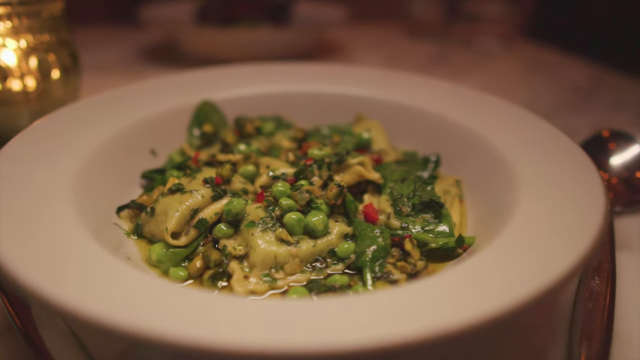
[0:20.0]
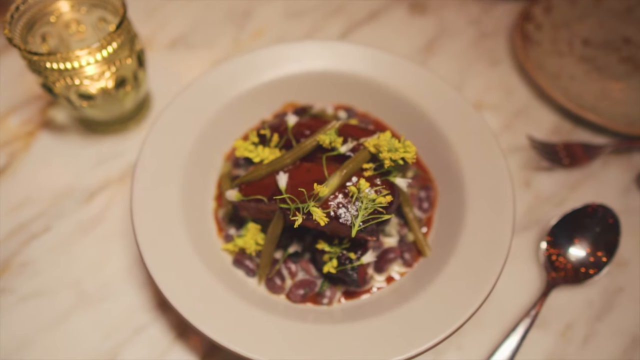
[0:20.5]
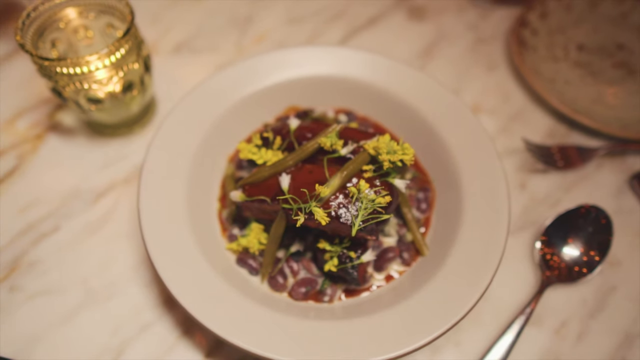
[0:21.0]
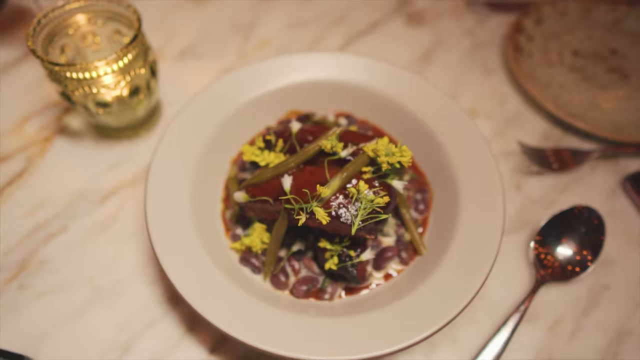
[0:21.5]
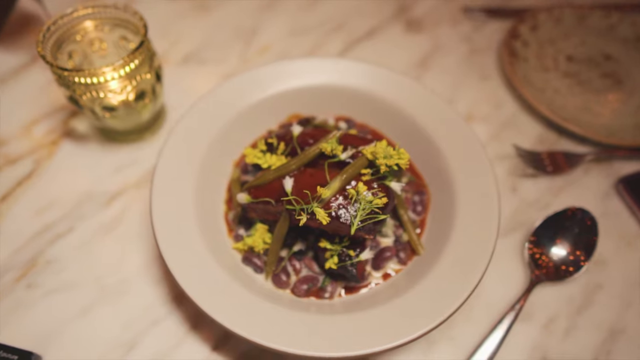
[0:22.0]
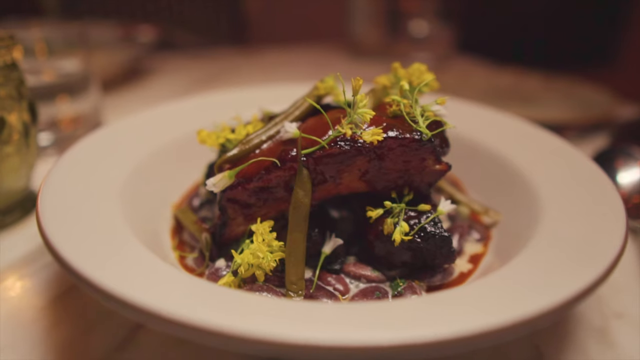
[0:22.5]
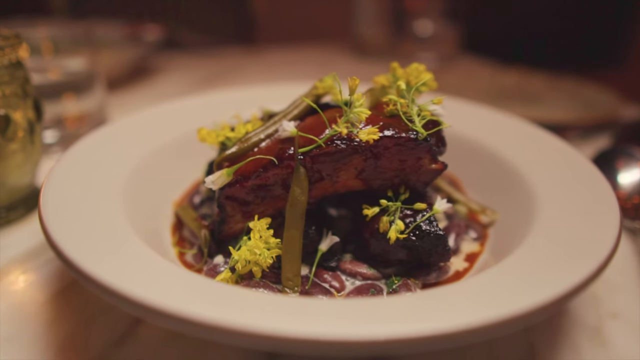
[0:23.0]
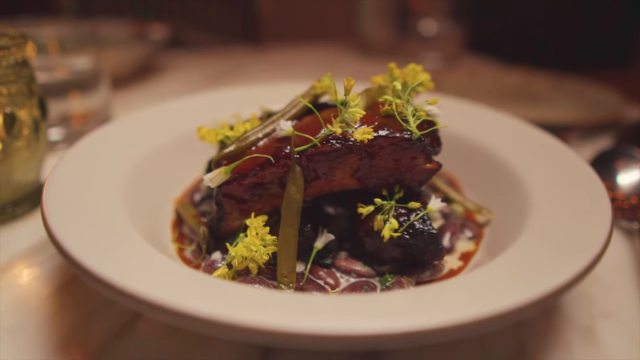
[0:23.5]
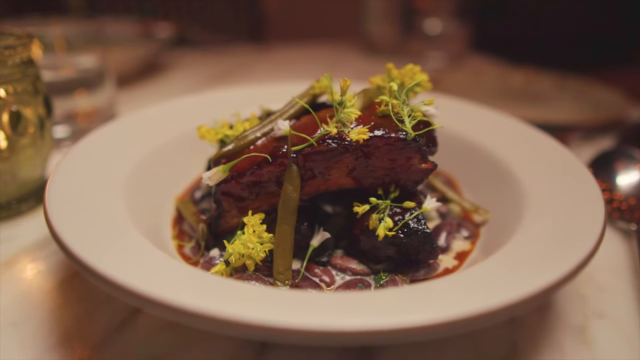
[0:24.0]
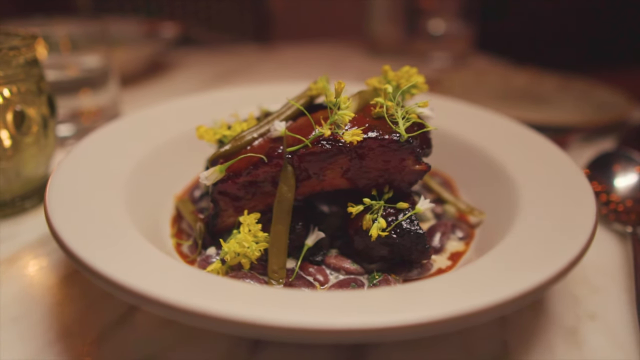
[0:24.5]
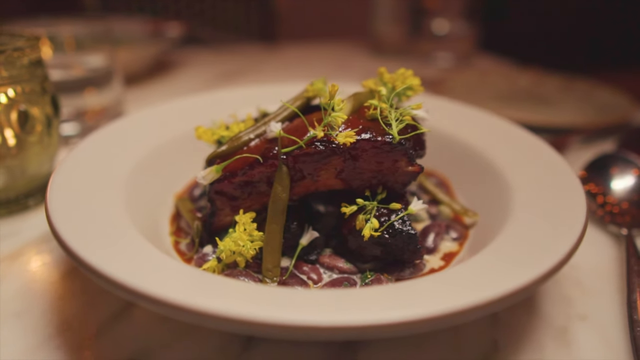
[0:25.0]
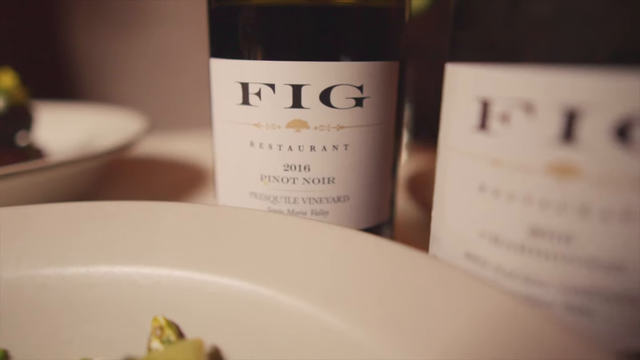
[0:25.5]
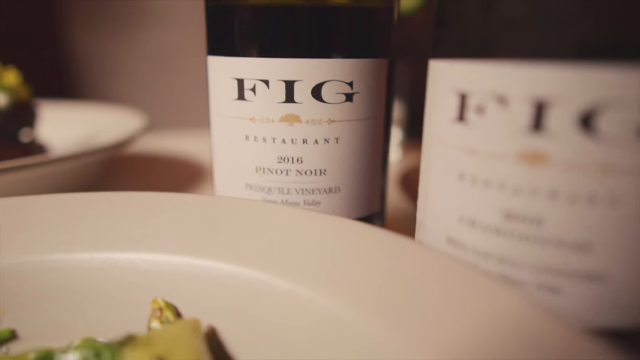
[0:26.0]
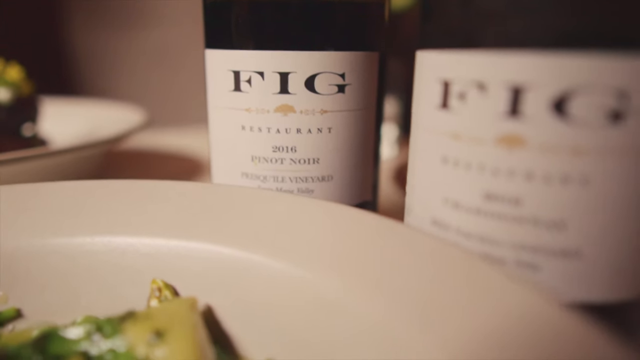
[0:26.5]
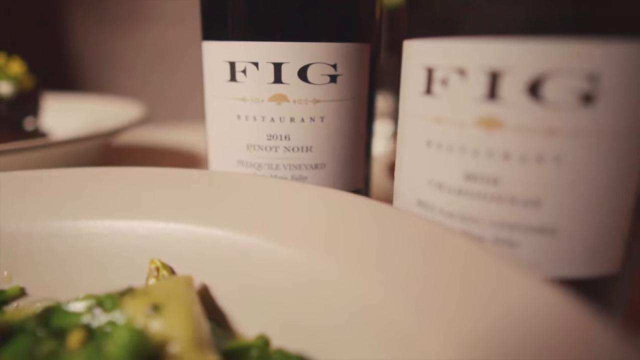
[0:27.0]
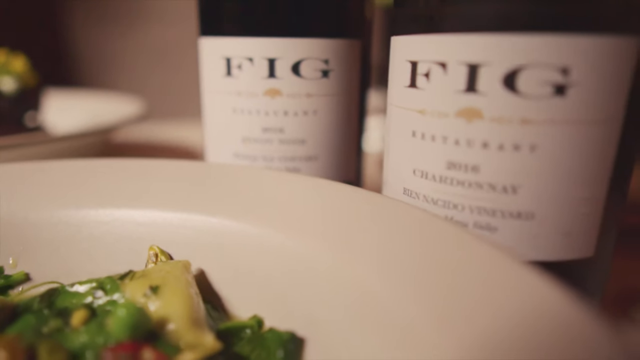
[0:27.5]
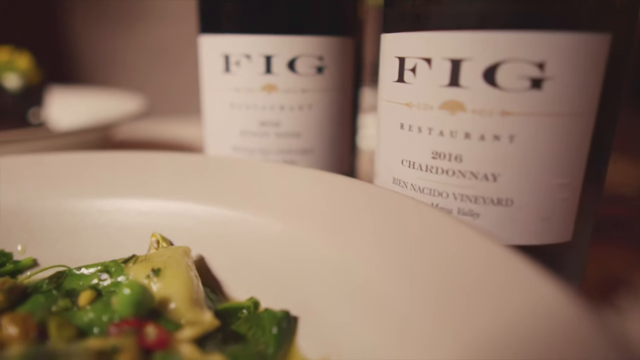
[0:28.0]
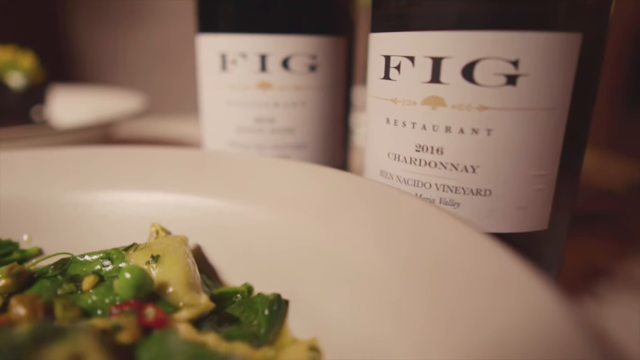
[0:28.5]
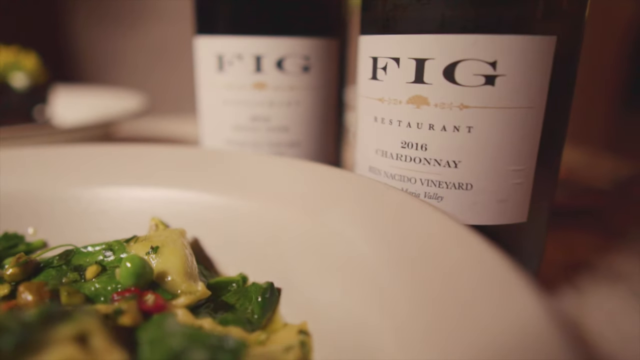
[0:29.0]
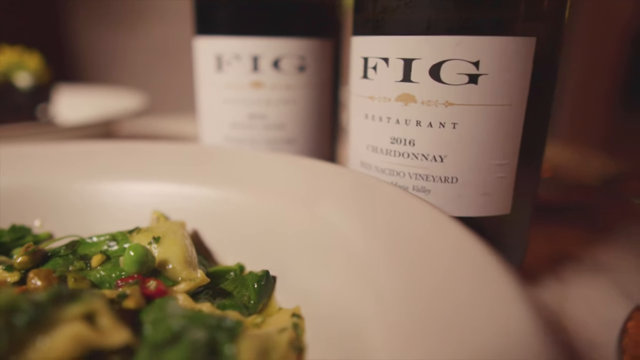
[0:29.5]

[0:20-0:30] A close-up shot shows a round bowl that appears to hold ravioli, with what look like spinach leaves and peas on top. In another shot, a bowl looks like it holds either olives or beans with some sort of possible sprout on top. A closer shot shows what look like flowers and maybe a piece of meat, and the camera kind of circles around it. Two bottles of wine, both labeled "fig," appear with a bowl of what appears to be the pasta dish in front of them. One more overhead shot of the pasta dish comes at the very end.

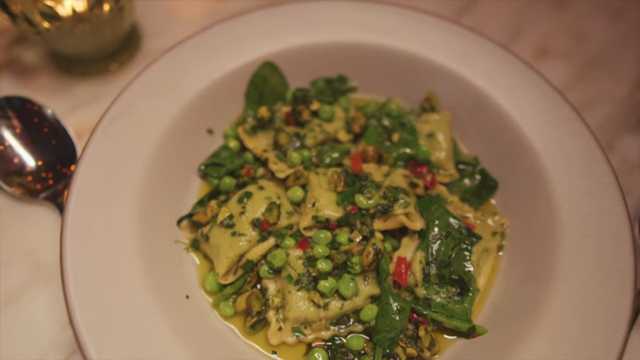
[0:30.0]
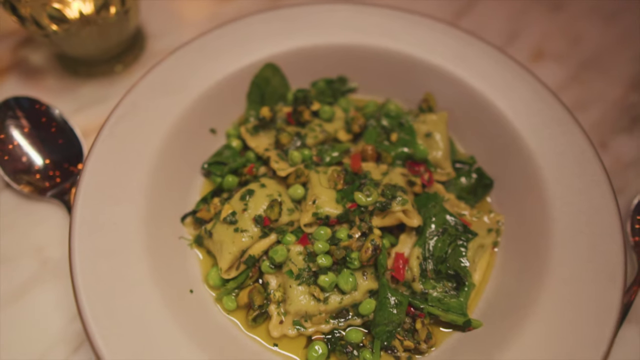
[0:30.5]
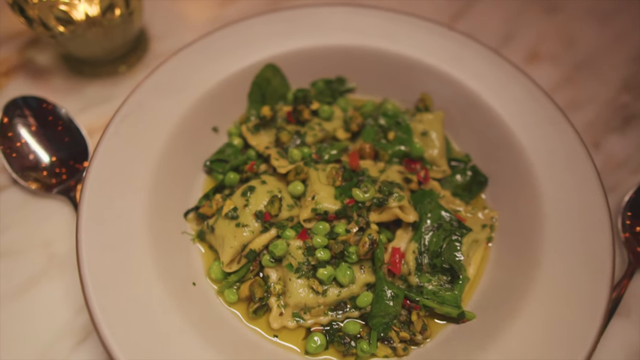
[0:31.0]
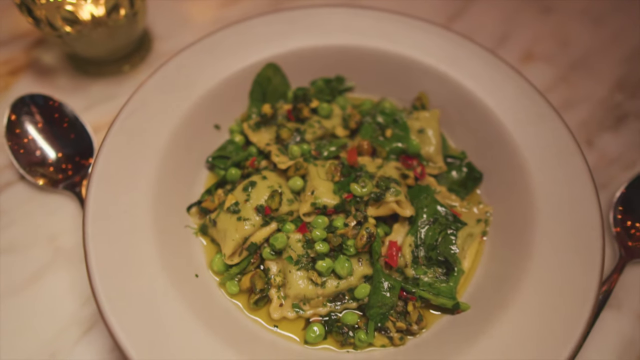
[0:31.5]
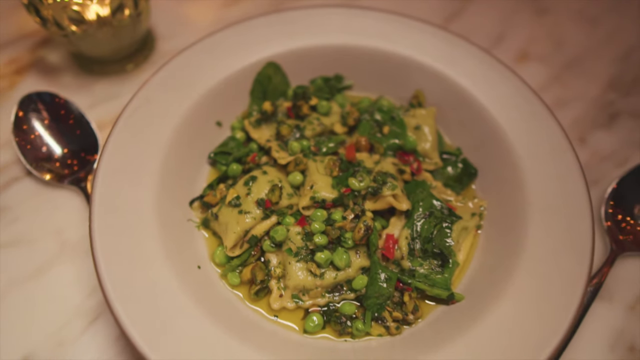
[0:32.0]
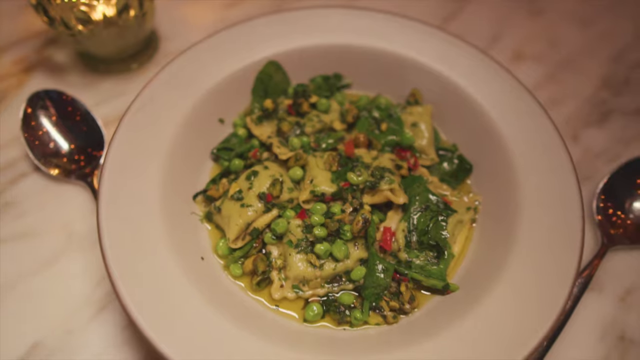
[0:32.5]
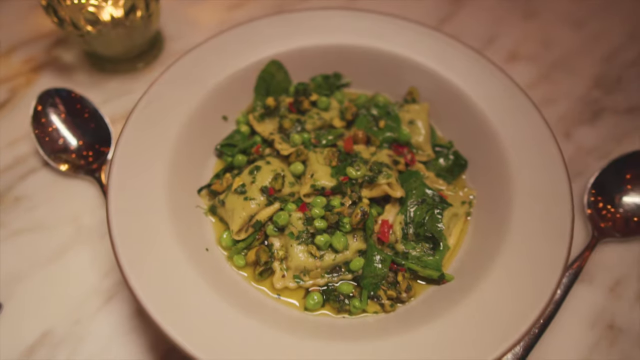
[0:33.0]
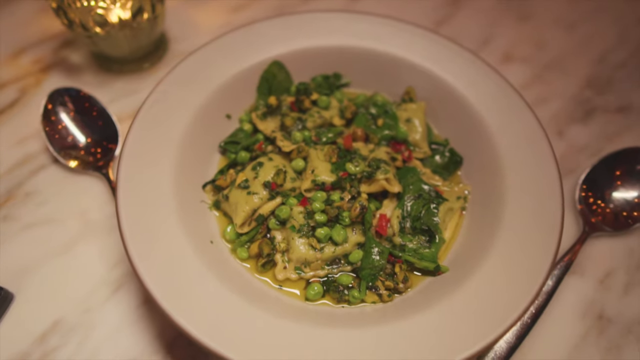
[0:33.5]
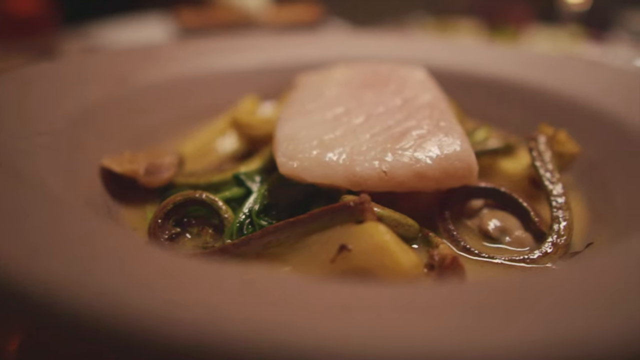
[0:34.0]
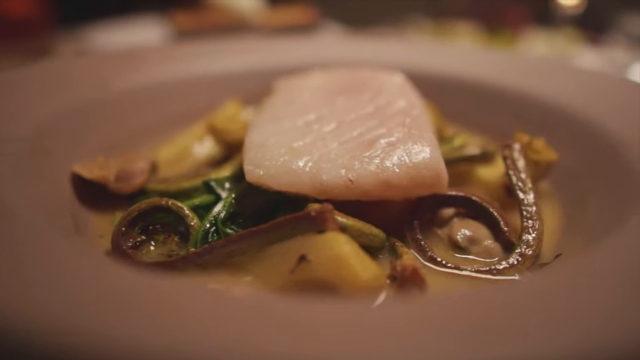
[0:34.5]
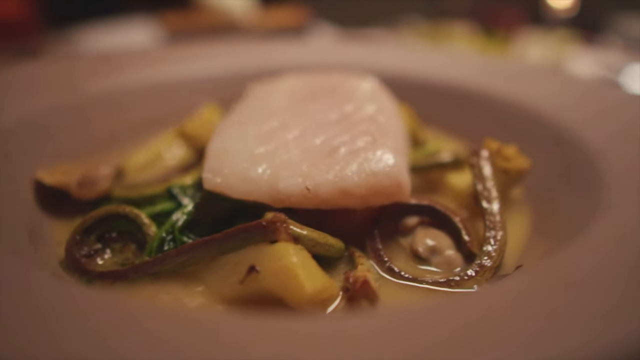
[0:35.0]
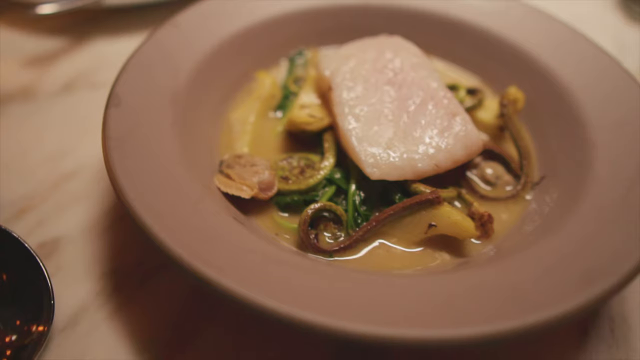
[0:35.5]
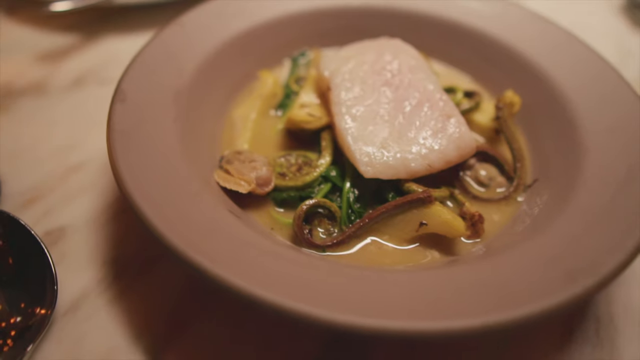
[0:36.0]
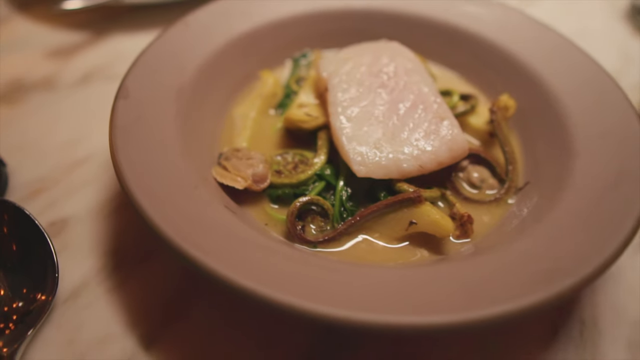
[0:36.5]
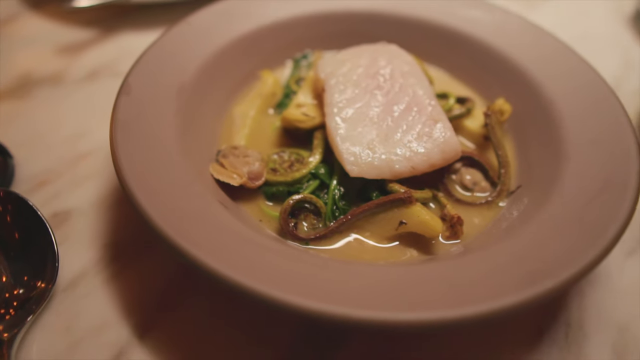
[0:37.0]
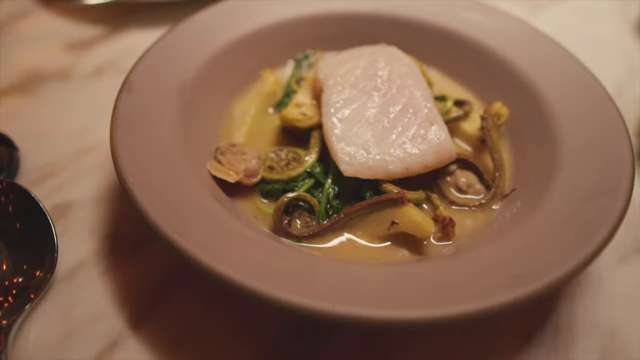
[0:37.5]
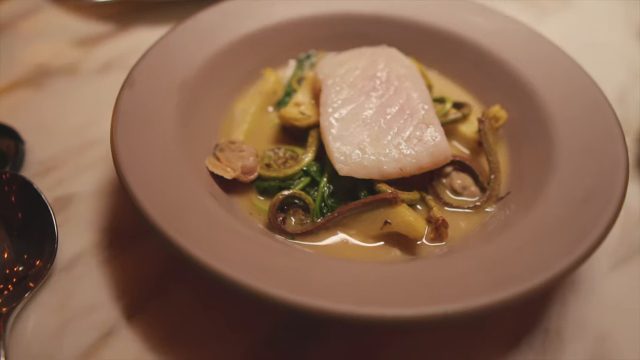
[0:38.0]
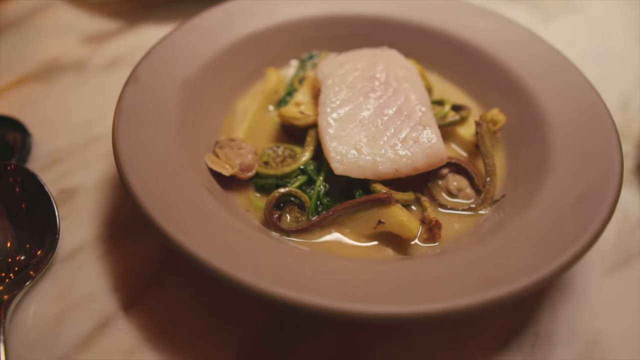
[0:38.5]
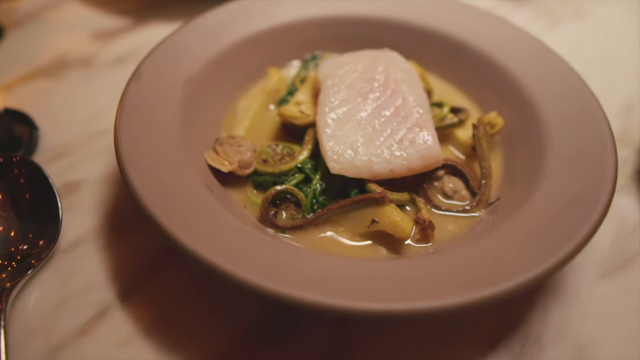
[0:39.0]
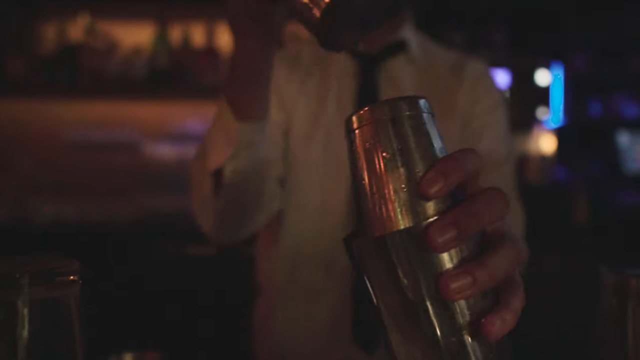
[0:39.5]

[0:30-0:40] An overhead shot shows what appears to be a ravioli dish with peas and spinach, and the view pulls back to reveal spoons on either side. Next is a shot of a fish with what appears to be a sauce and various vegetables, followed by another shot of it from a different angle. A bartender in a white shirt is mixing a drink; he appears to hold a metal canister in his left hand and another in his right. The environment appears somewhat dark, so it is not very clear what else is going on in the room.